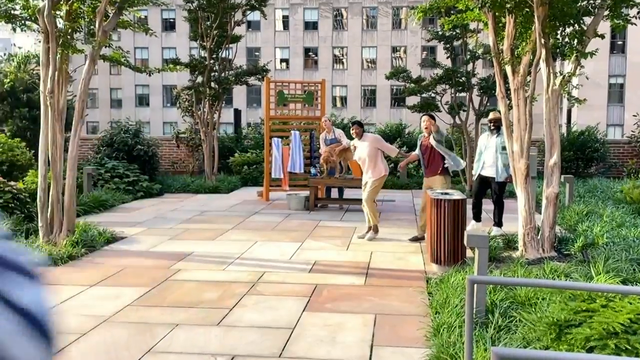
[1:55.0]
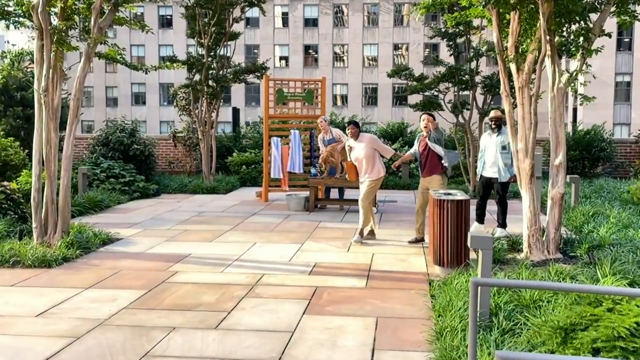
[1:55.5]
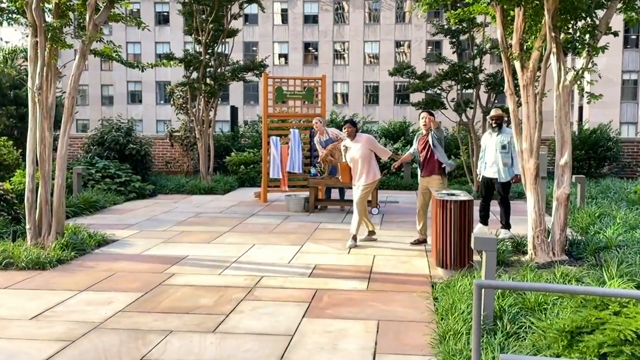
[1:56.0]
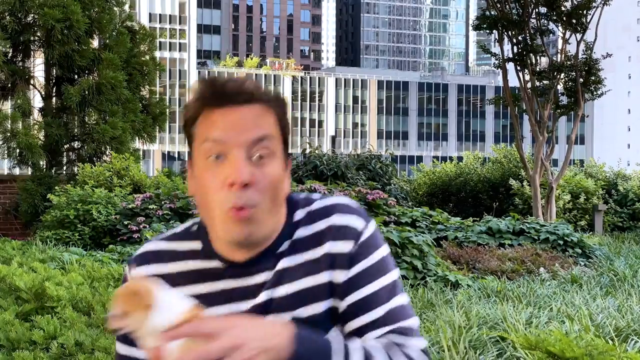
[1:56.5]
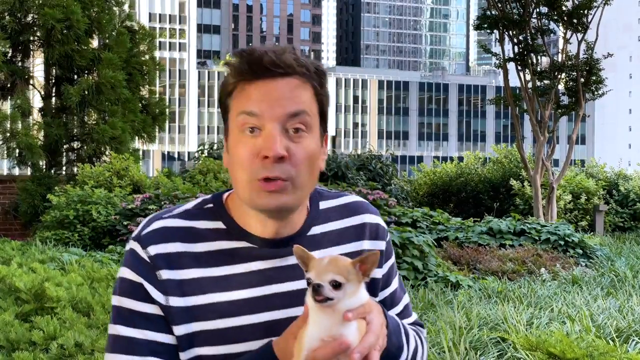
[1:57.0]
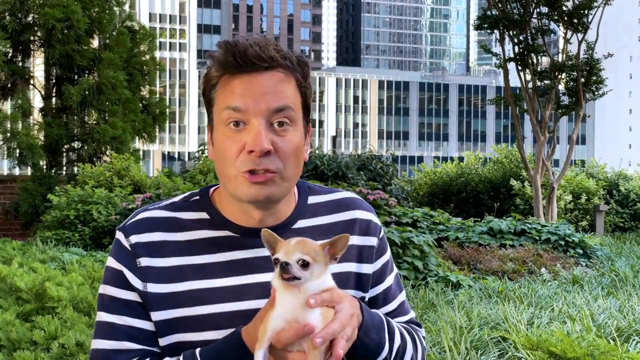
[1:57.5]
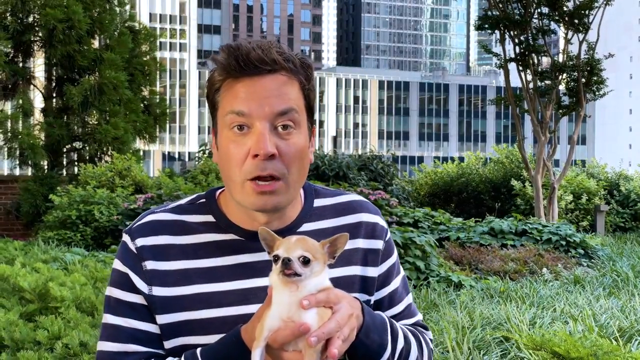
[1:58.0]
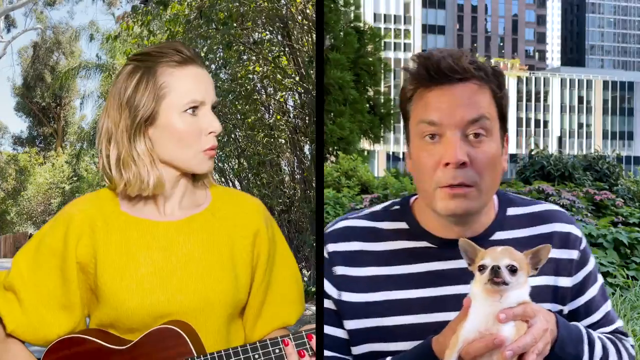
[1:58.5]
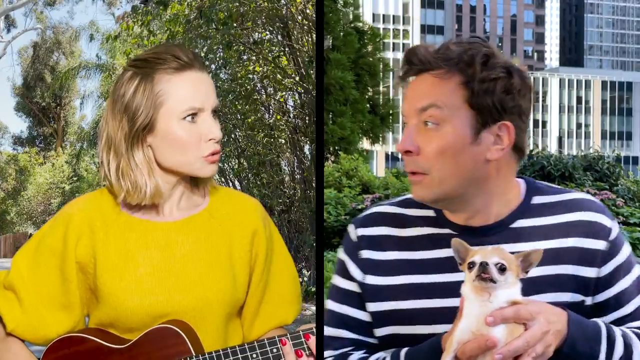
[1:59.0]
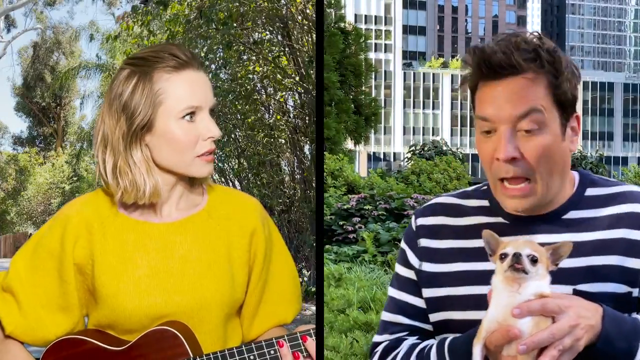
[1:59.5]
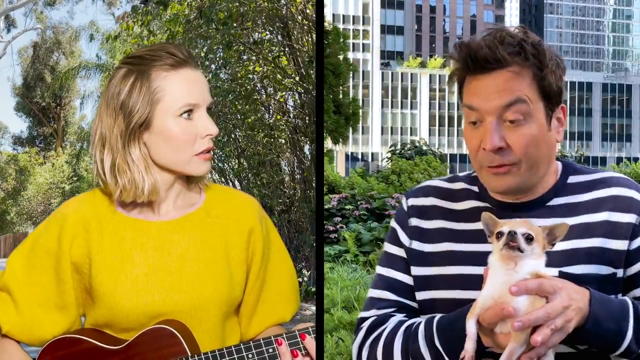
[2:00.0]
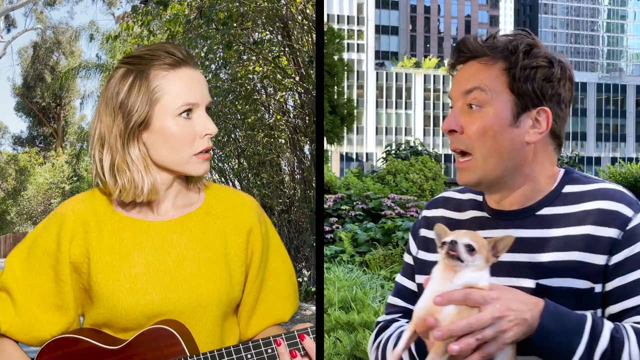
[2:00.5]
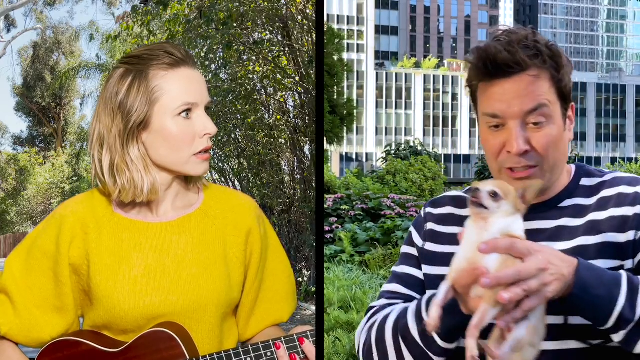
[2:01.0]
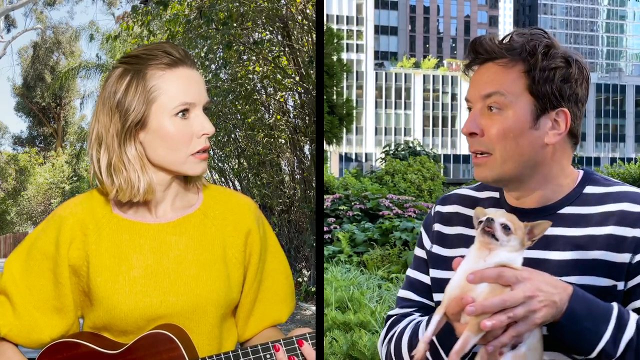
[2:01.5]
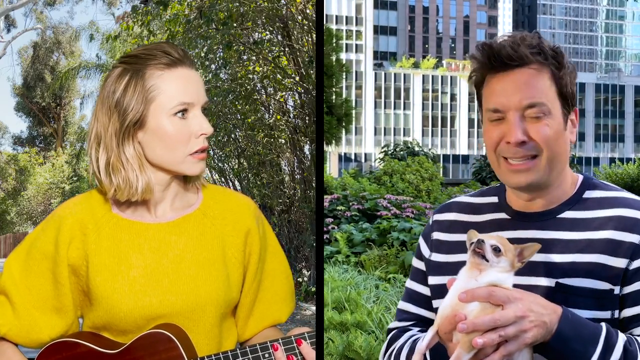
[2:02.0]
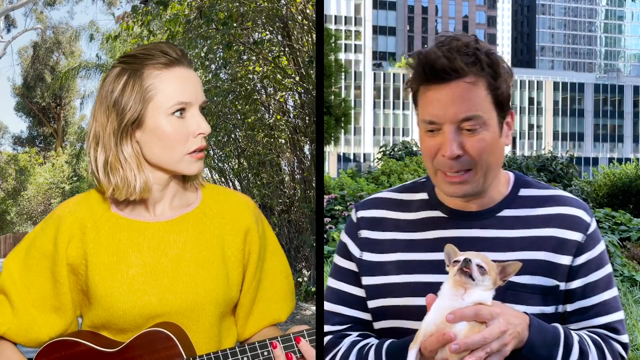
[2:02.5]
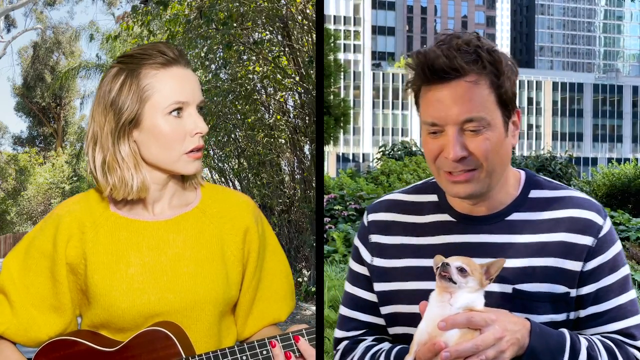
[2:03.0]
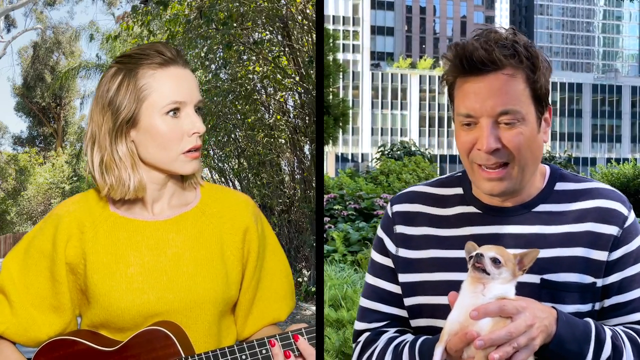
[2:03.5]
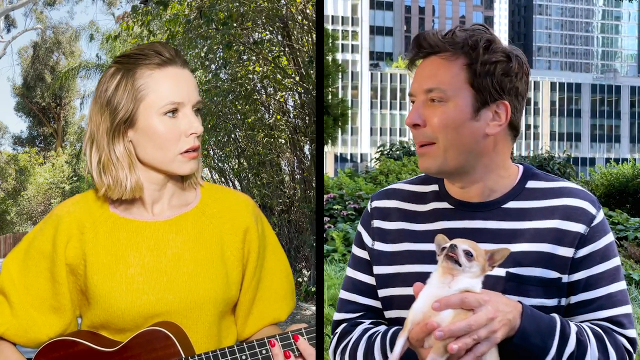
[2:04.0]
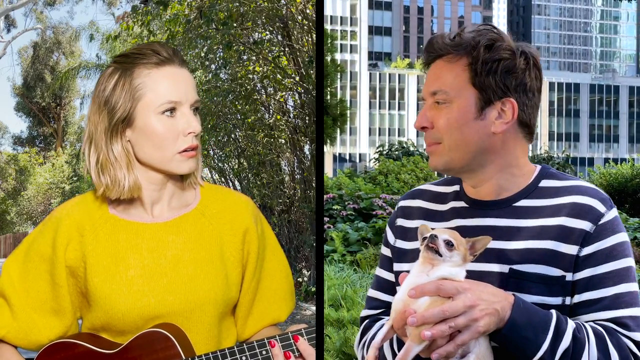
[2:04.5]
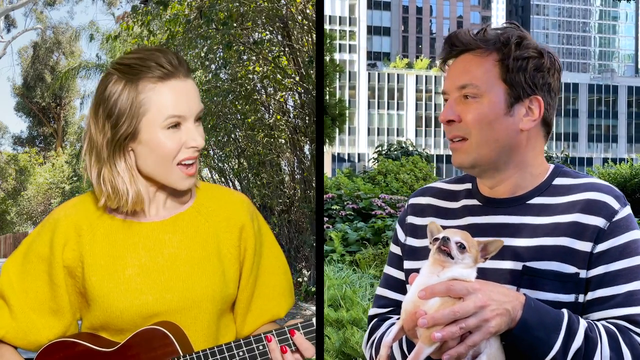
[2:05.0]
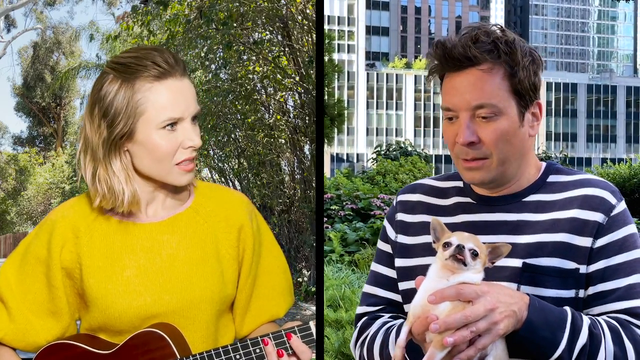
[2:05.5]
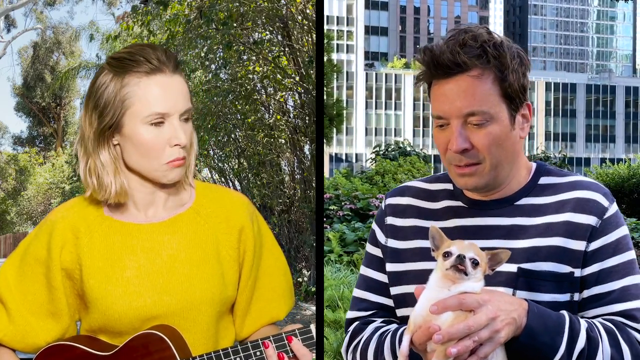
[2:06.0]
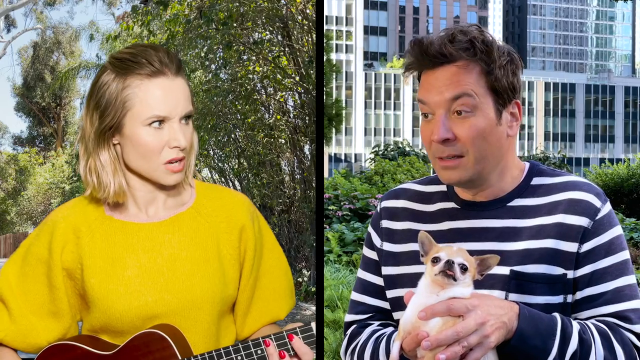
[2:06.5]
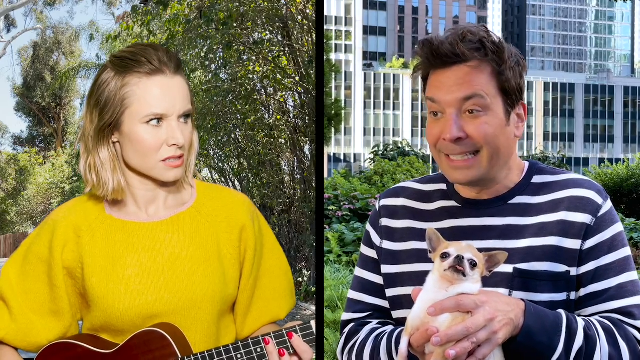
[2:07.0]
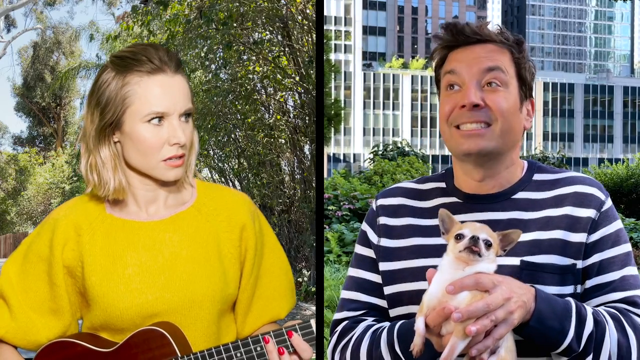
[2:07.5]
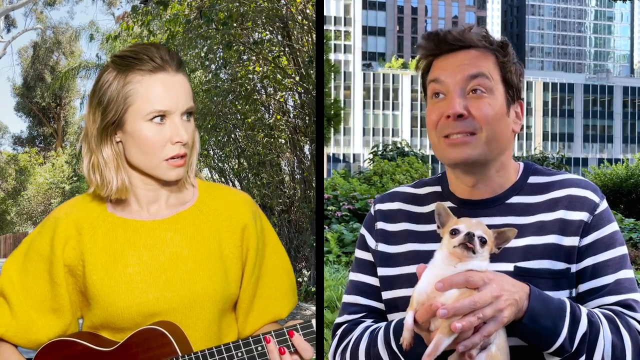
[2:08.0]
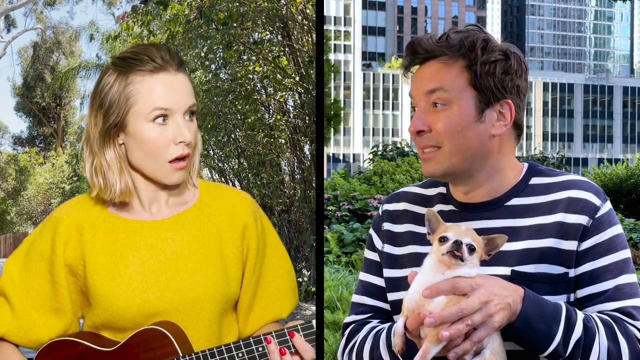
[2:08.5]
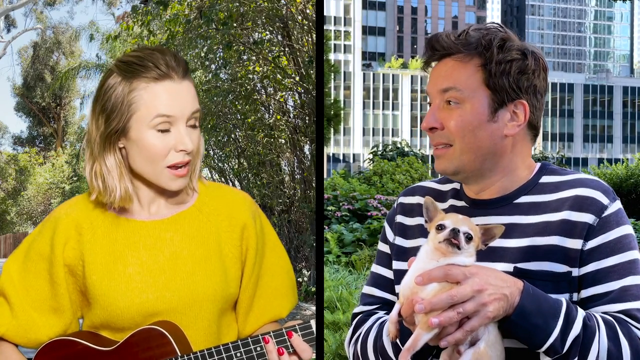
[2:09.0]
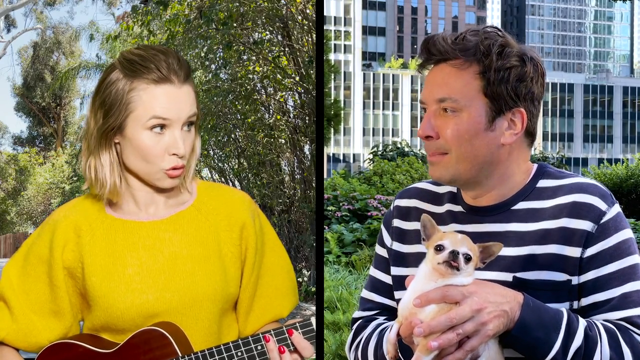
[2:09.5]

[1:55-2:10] The man stops, holding the little Chihuahua, turns around and sees the couple running toward him; he is still in the park and is talking. The screen turns into a split screen, with the man on the right holding the Chihuahua and the woman in the yellow shirt or gold sweater on the left, still playing a little guitar. They talk to each other and look at each other; it looks like she is asking what is going on or what he is doing, and the man says "I don't know" and talks about the dog in his hand. He looks frustrated or puzzled, or like he can't believe what he is doing. The camera pans back to the couple running toward him. The man almost looks like he regrets picking up the dog or doesn't understand why he grabbed it. The woman asks him, he talks to her and she responds, holding her guitar in her hand the whole while.